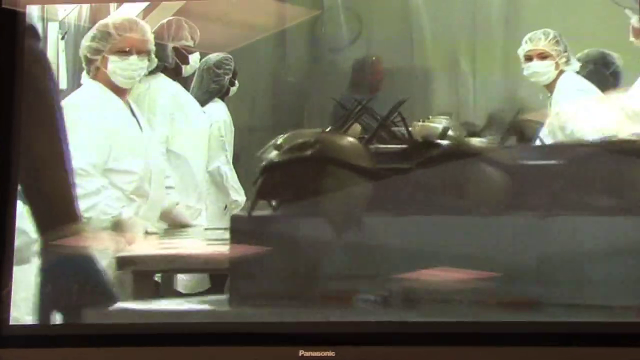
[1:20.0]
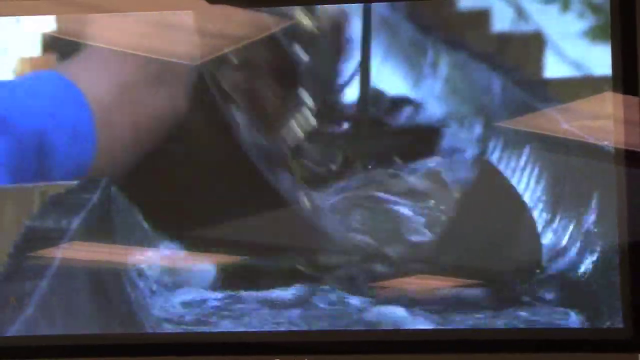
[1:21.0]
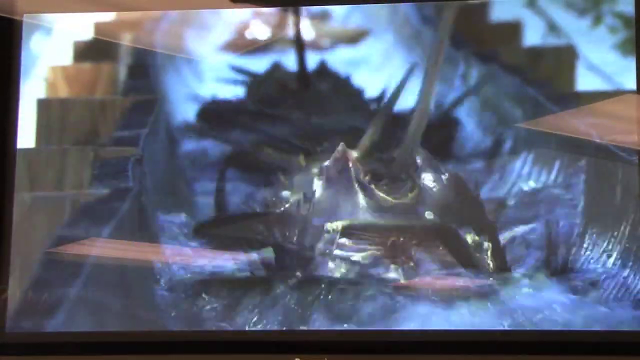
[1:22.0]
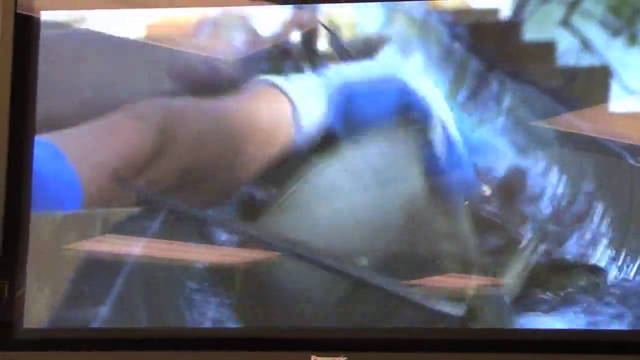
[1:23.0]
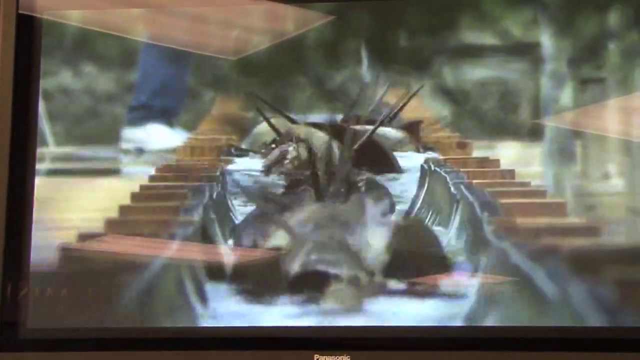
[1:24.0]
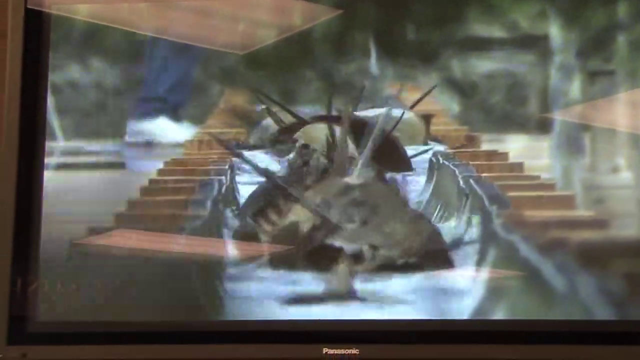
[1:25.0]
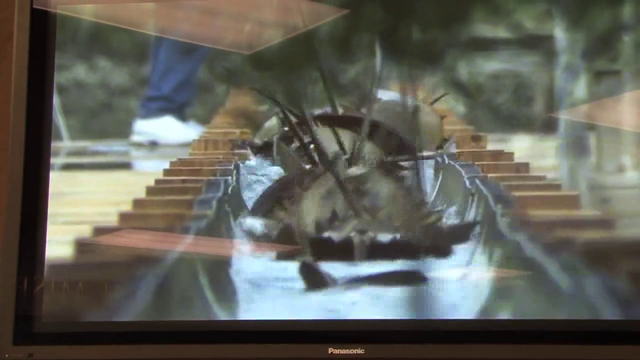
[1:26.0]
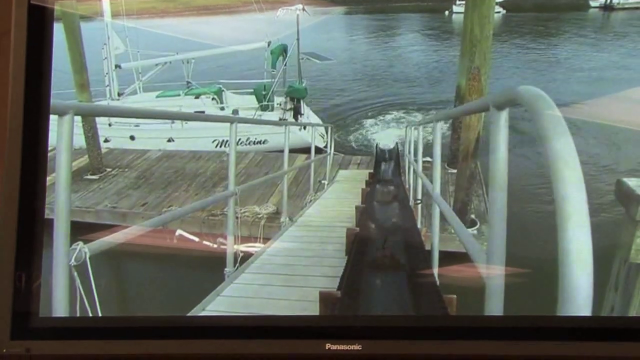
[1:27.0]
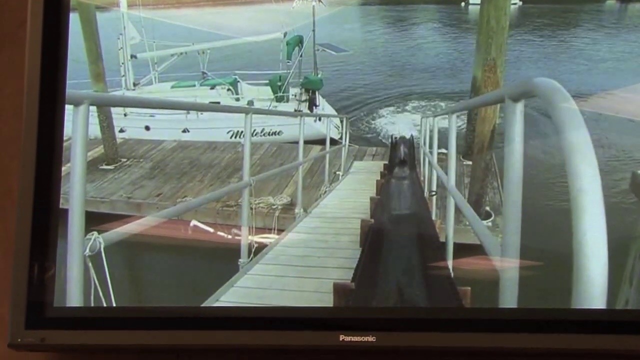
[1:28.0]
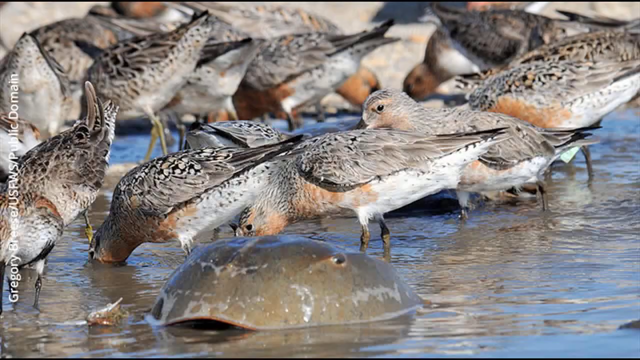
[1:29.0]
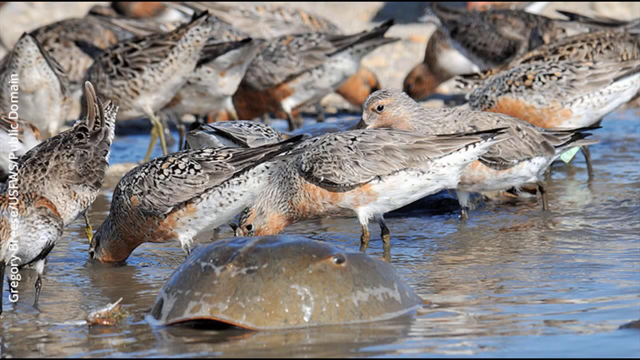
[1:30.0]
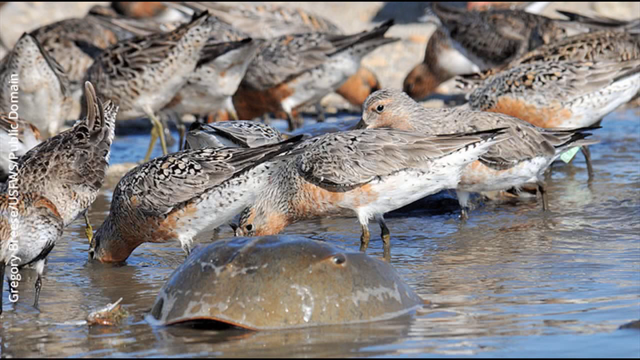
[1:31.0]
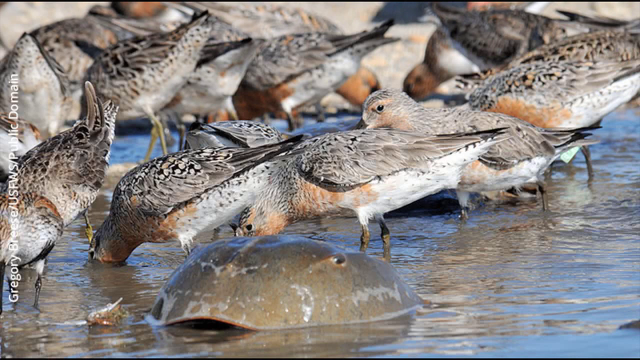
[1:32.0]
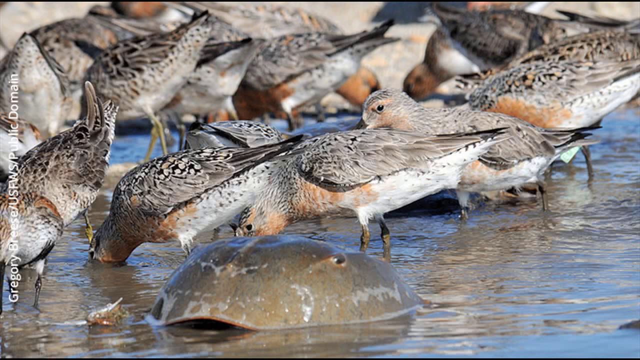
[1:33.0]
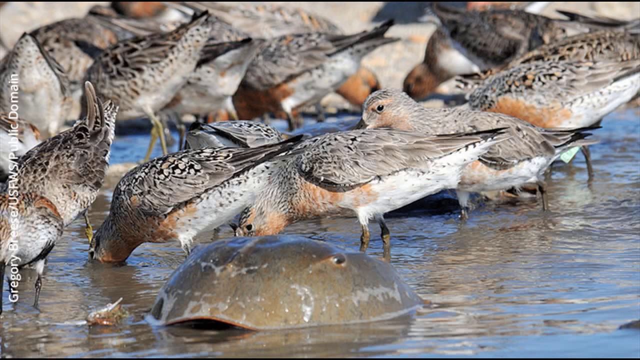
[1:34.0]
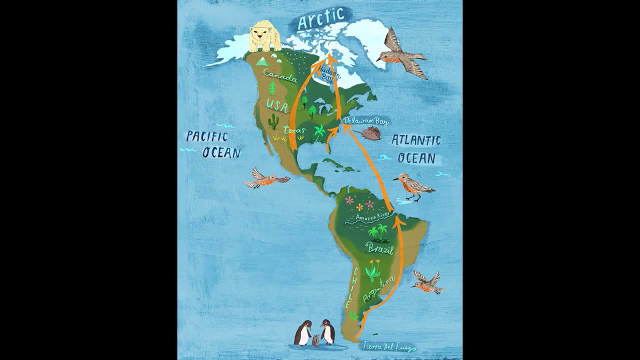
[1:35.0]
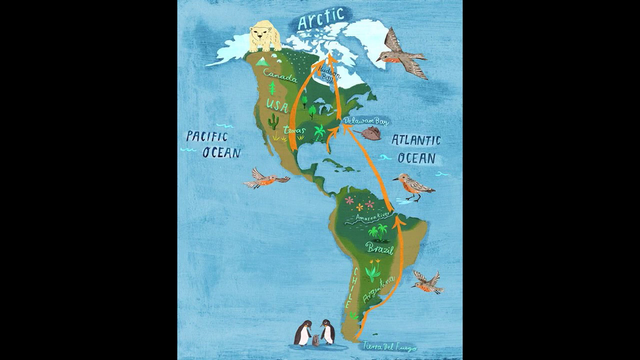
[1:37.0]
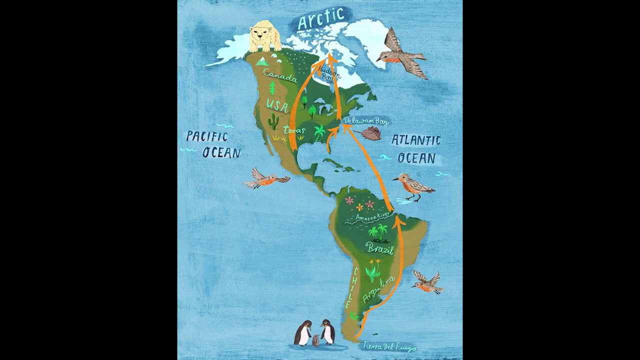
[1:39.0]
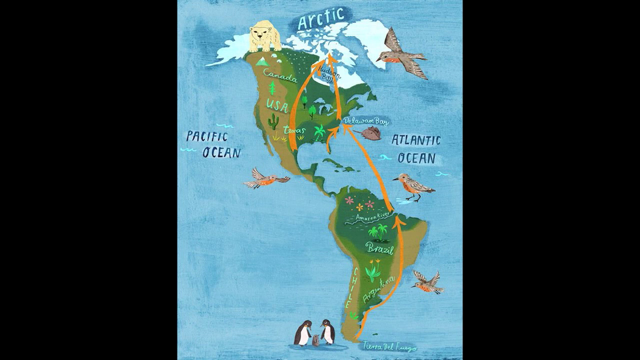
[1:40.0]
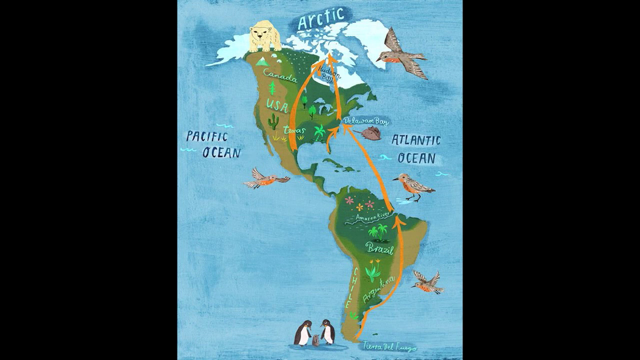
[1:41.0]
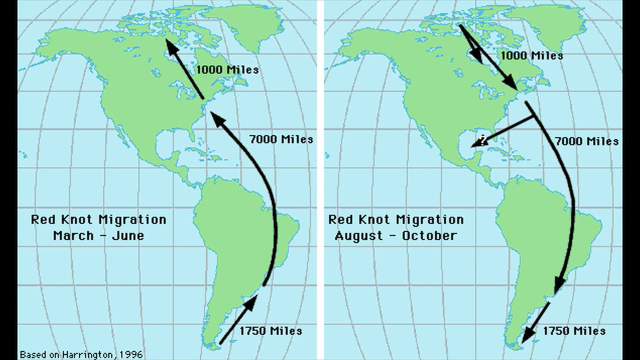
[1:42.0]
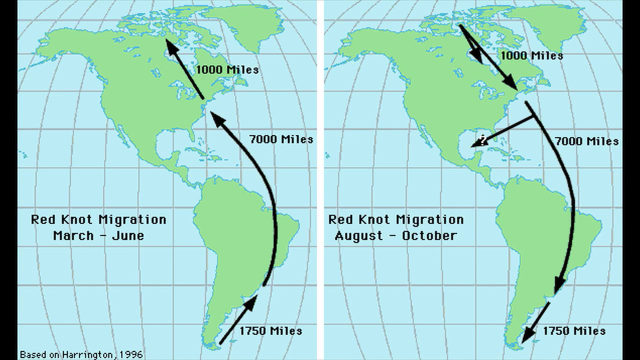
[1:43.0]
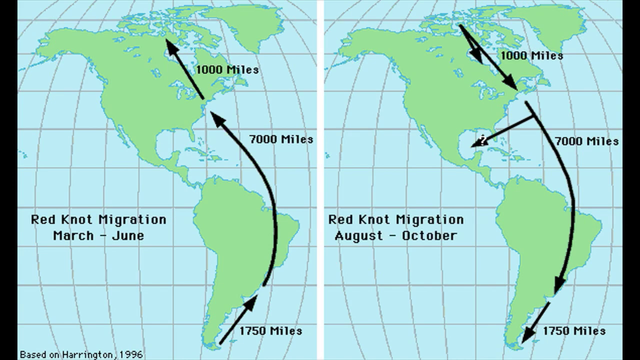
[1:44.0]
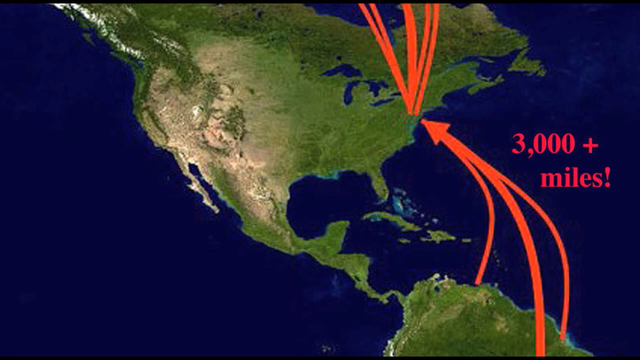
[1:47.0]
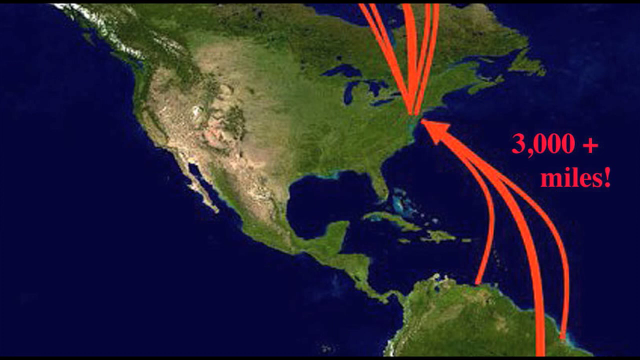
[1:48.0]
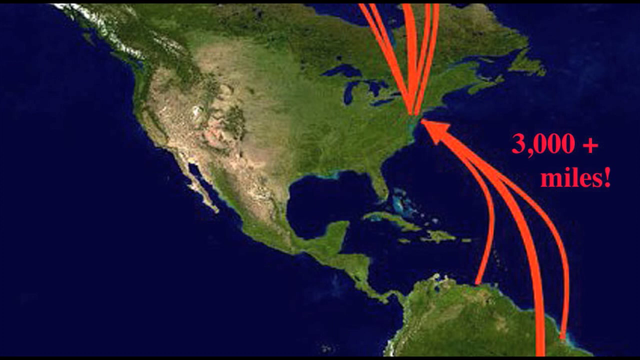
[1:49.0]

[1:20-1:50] The horseshoe crabs are washed; it is unclear whether they are alive or dead. They go through a chute with grooves on the sides and water in it, then fall down a slide with railings and slide into the water. A photograph shows red knot birds, more than 10 of them, with a few horseshoe crabs; the birds appear to be eating the horseshoe crabs' eggs. A map of North and South America has orange arrows pointing from the tip of South America all the way to the Arctic, showing the migratory pattern of the red knot. Another migratory pattern of the red knot covers March to June and August to October. Another shows migration from the Columbia-Venezuela coast to the eastern seaboard of the United States, a journey of about 3,000-plus miles, and then from the eastern seaboard to the Arctic.